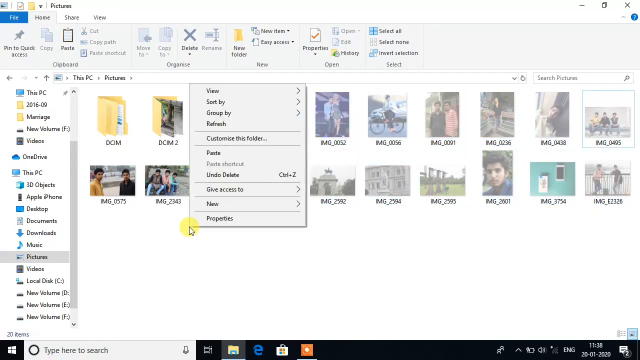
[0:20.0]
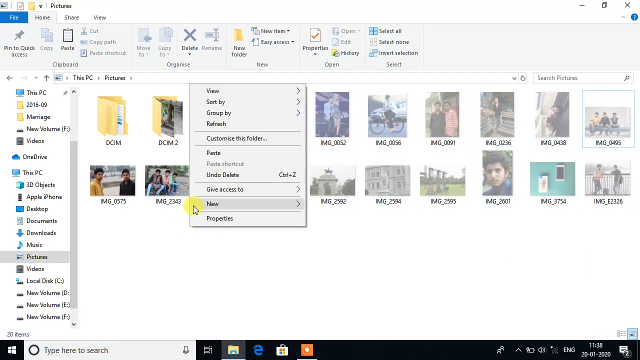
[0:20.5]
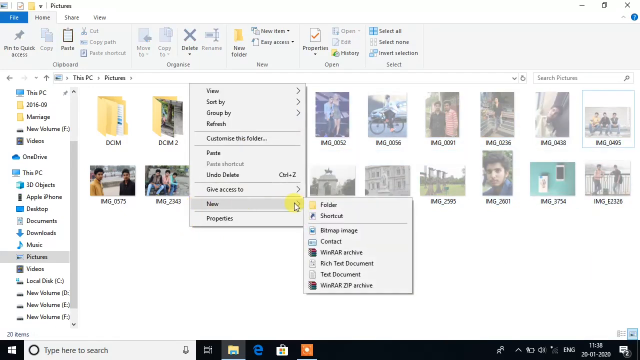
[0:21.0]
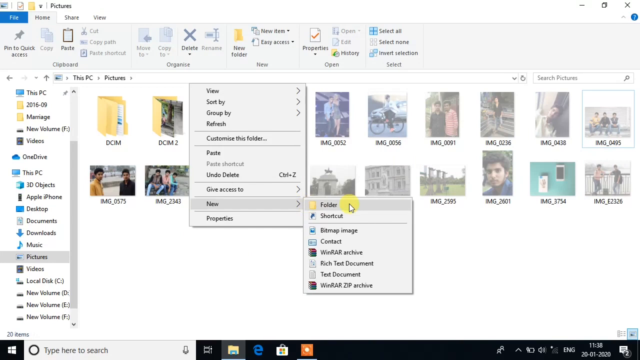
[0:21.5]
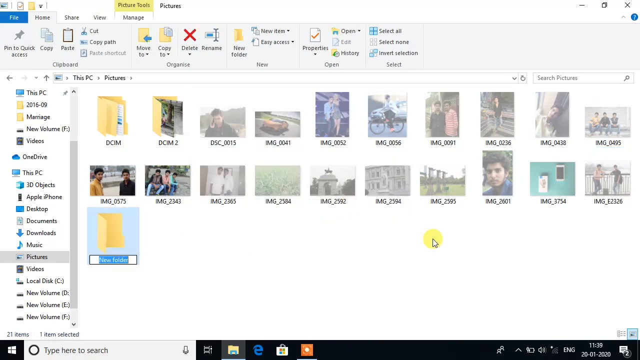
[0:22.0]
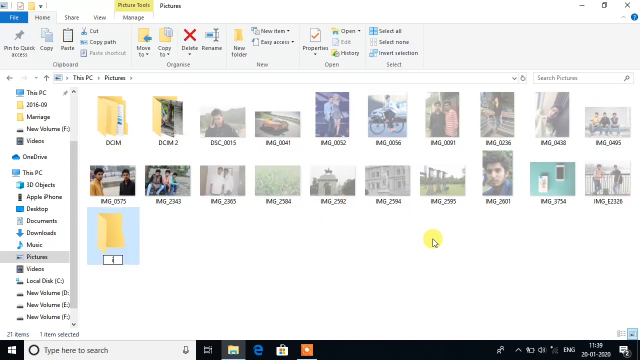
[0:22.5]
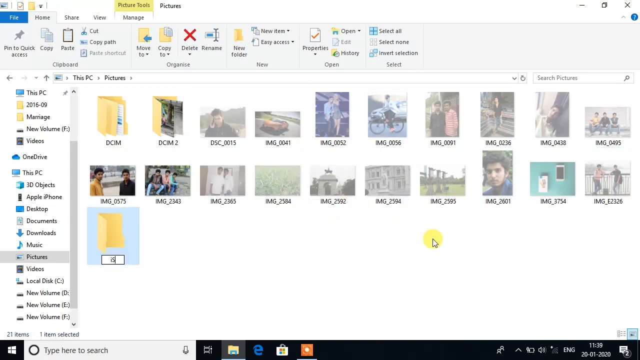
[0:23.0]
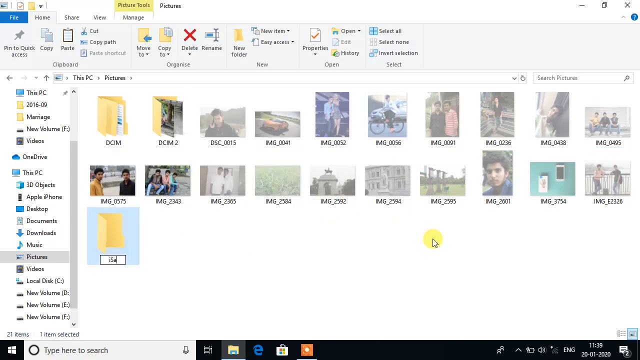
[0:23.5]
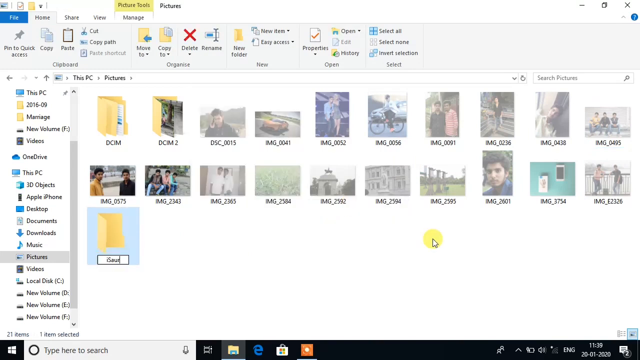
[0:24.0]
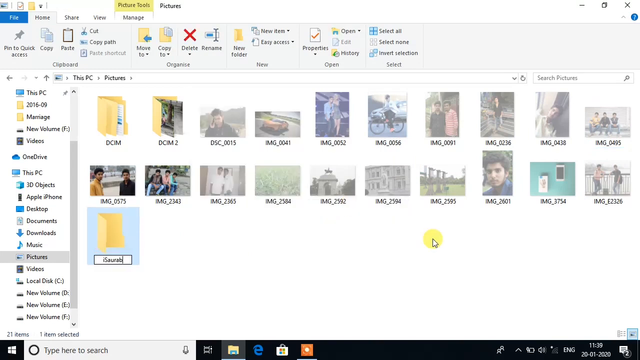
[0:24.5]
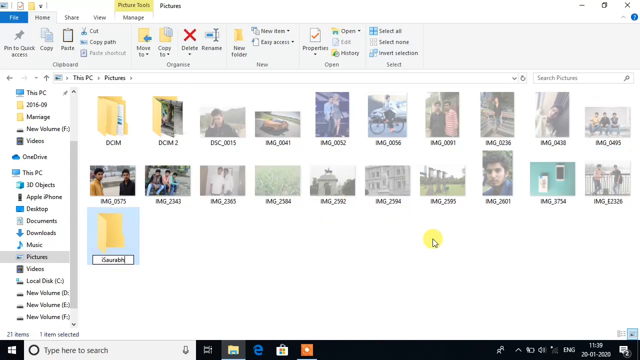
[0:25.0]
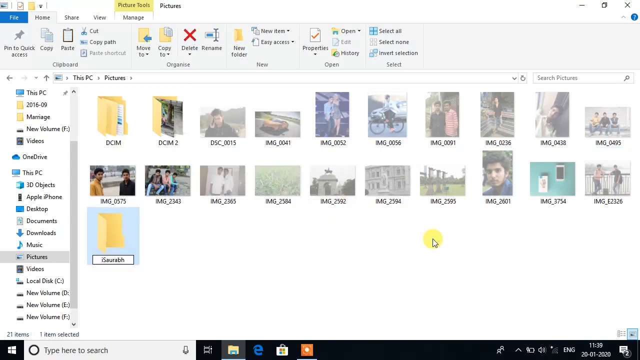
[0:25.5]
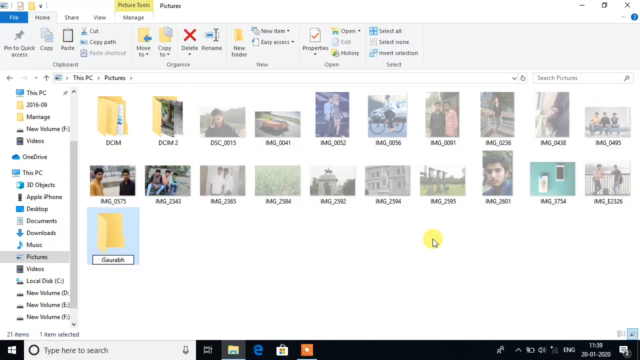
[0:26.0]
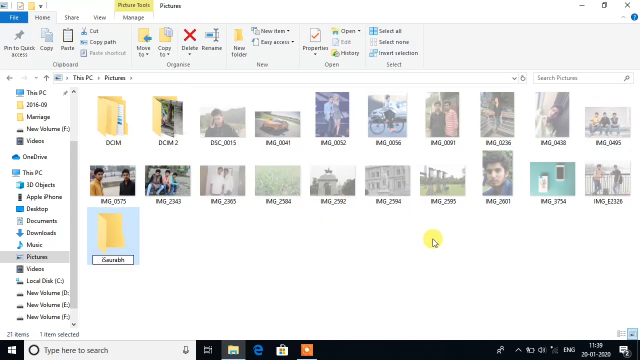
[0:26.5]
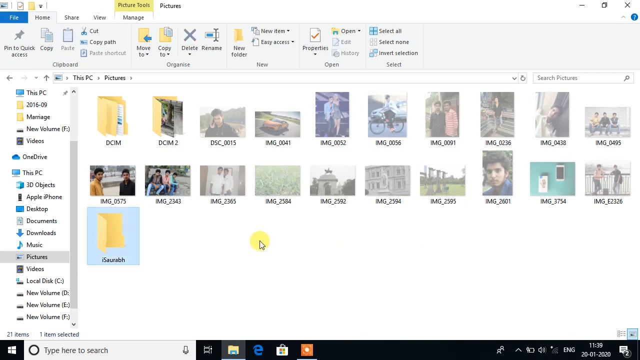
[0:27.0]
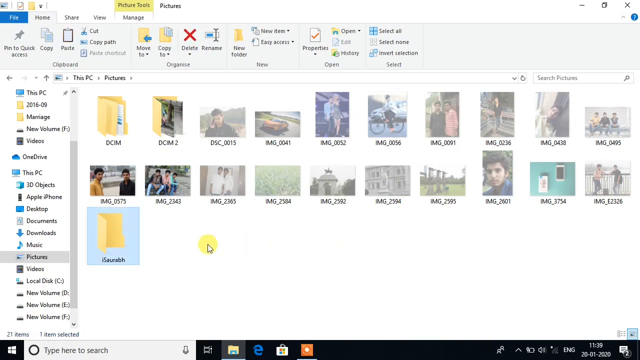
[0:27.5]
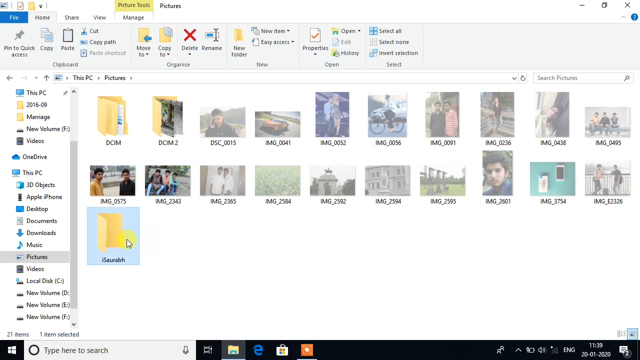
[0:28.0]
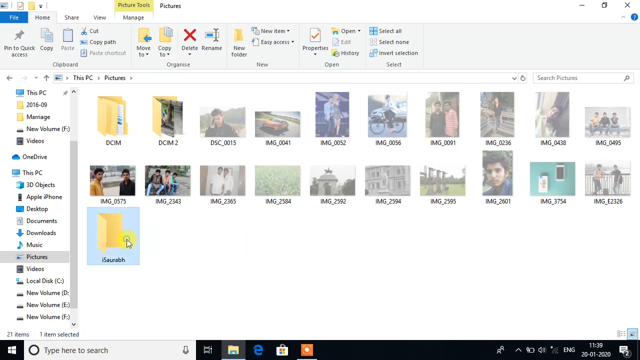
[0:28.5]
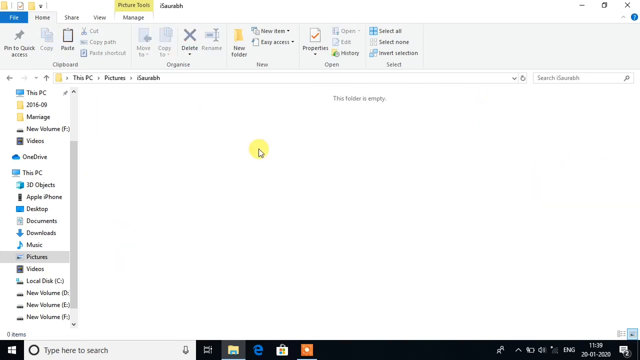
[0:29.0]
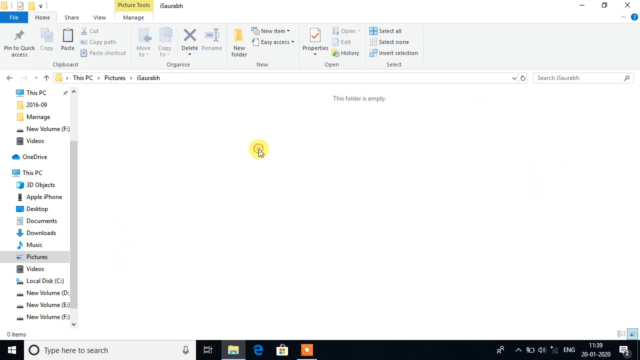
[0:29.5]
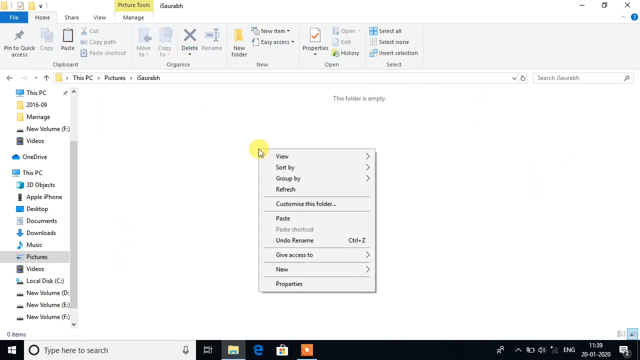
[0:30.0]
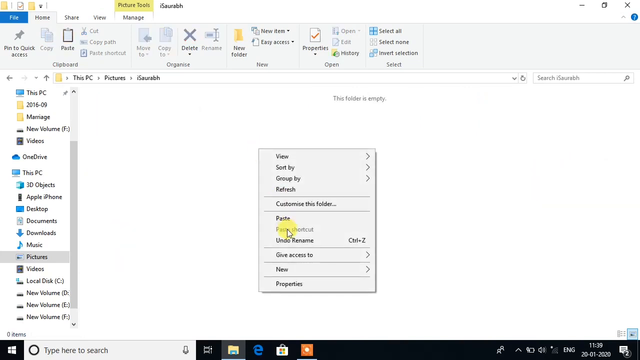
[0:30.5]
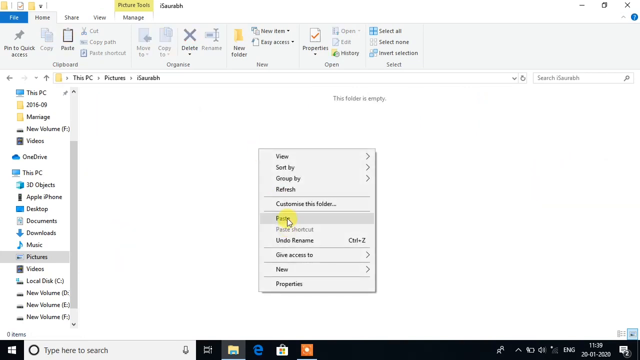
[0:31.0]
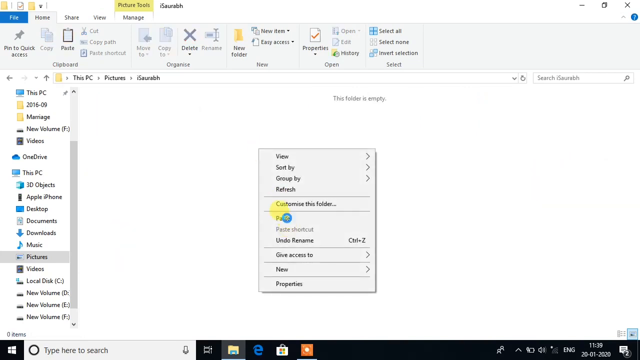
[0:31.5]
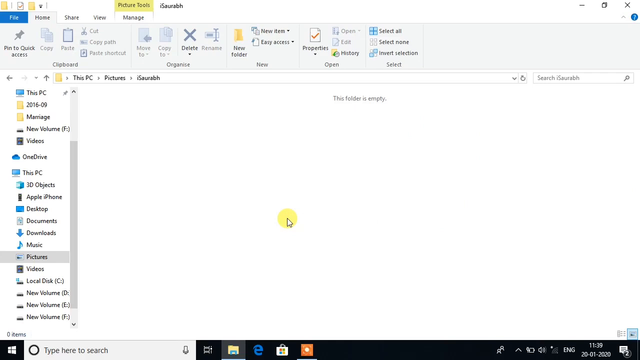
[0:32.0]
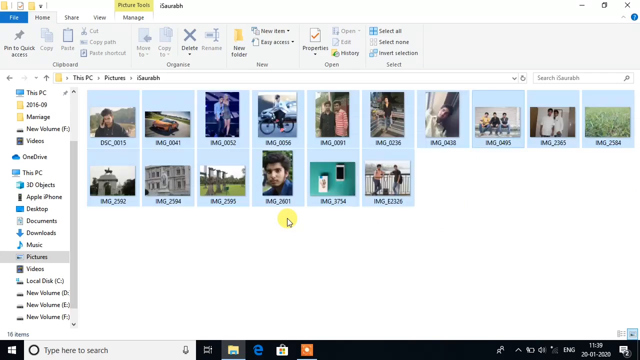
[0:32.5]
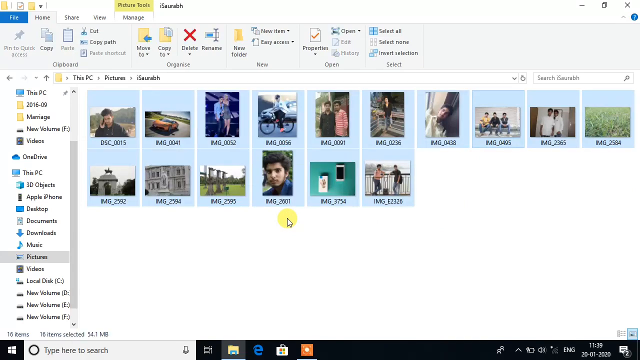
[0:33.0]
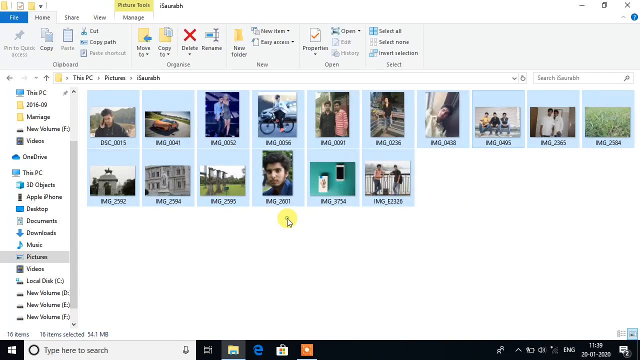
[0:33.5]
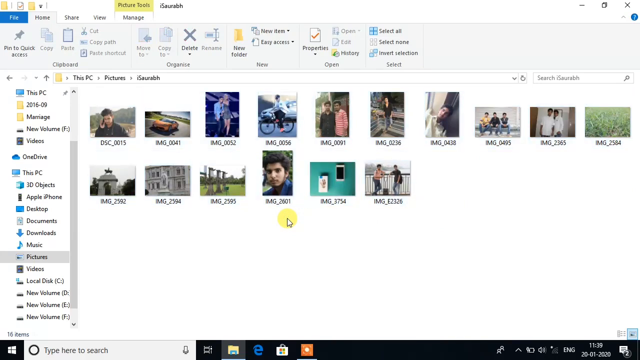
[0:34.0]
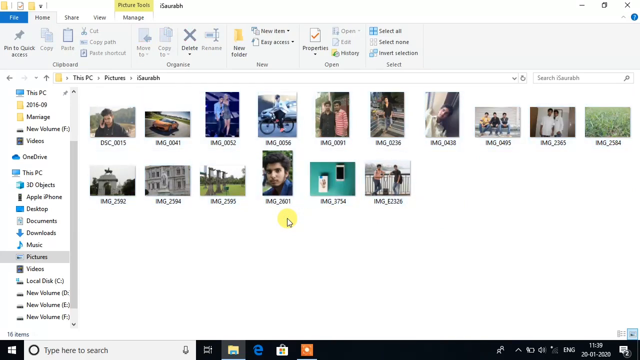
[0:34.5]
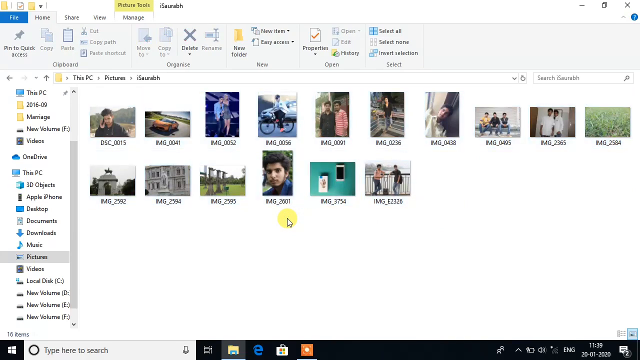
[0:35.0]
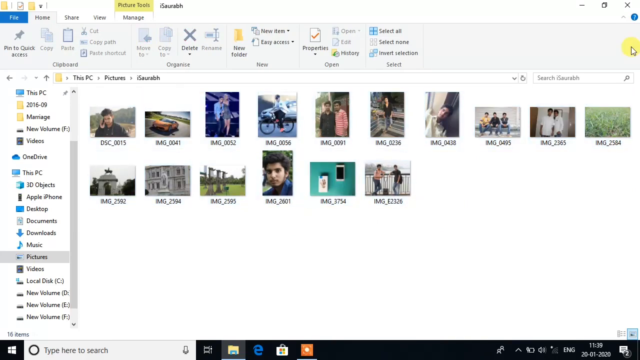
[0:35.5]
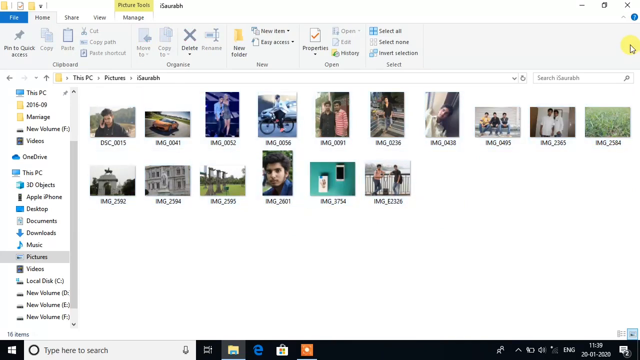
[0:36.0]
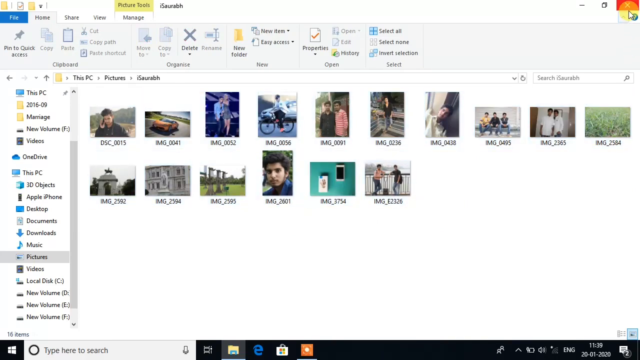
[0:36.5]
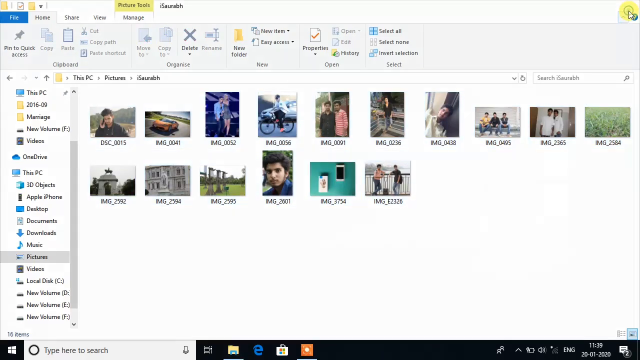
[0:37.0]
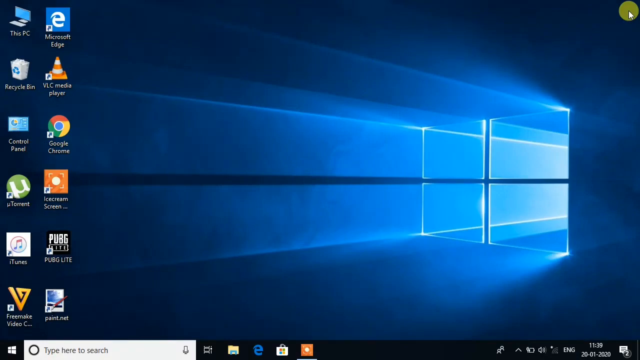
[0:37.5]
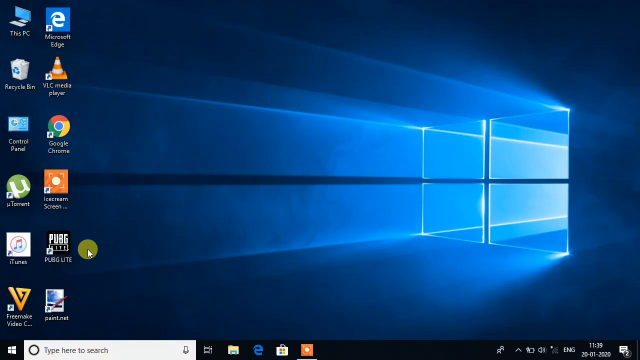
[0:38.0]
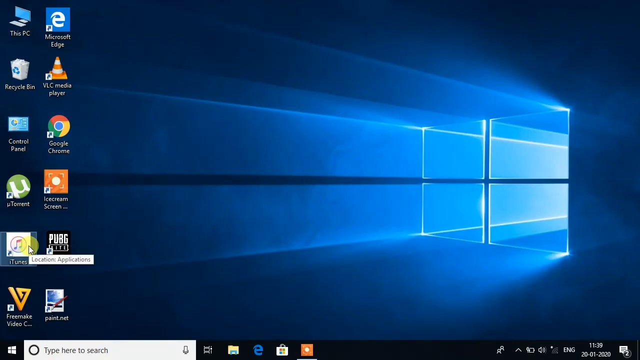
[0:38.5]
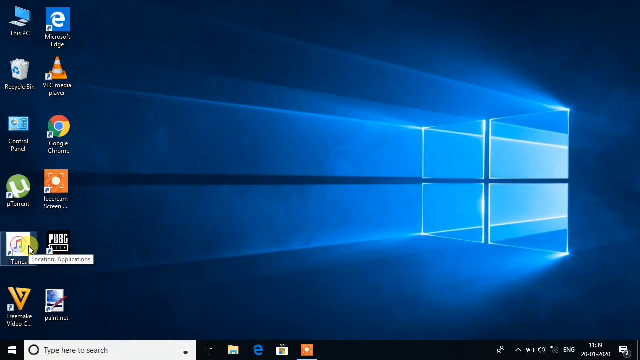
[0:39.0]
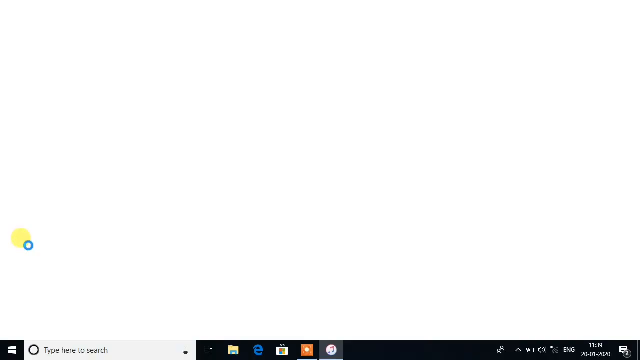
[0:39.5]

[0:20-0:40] The user goes to New Folder and creates a new folder with a name that is too small to read. They right-click and choose paste, and all the photos move into the folder. The photos are a handful of random pictures, mostly of people and a few of buildings. The user then goes to the top of the screen and clicks the red X to close everything, and moves over to what looks like iTunes. It appears to be a simple tutorial on moving photos into a newly created folder on a Windows computer.